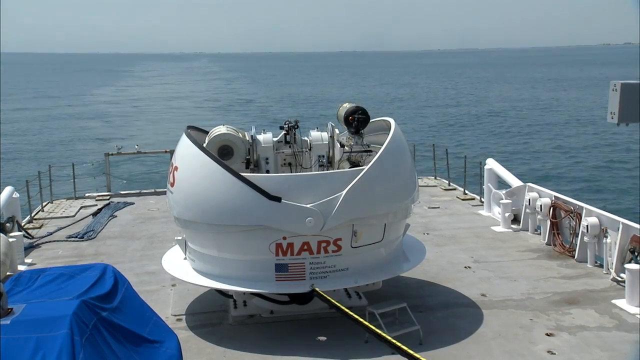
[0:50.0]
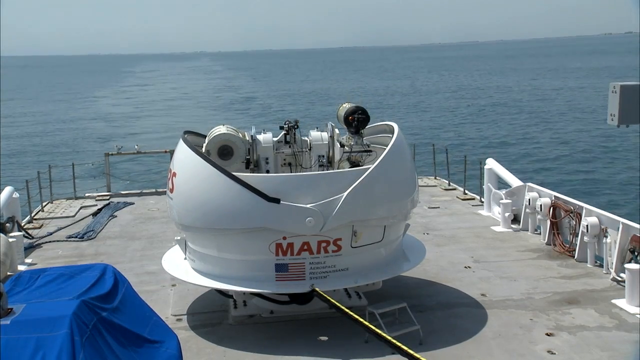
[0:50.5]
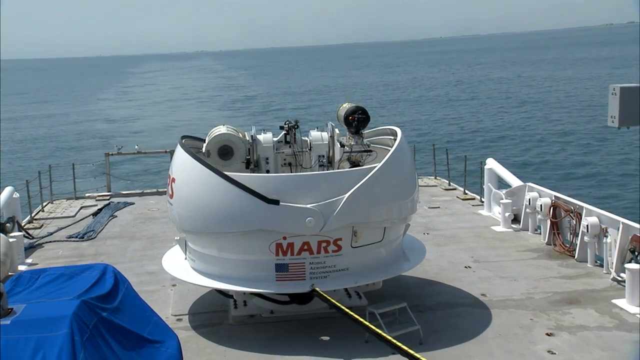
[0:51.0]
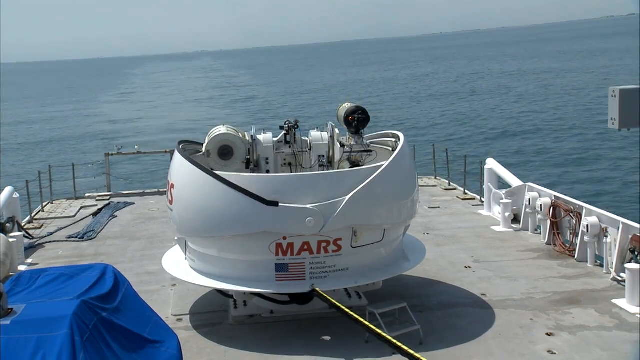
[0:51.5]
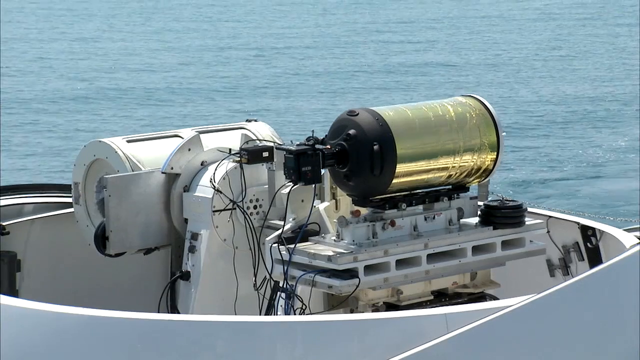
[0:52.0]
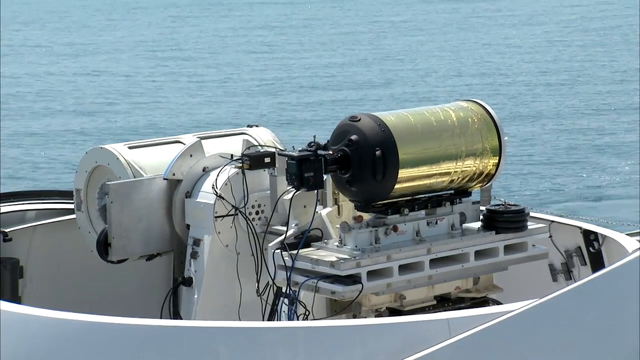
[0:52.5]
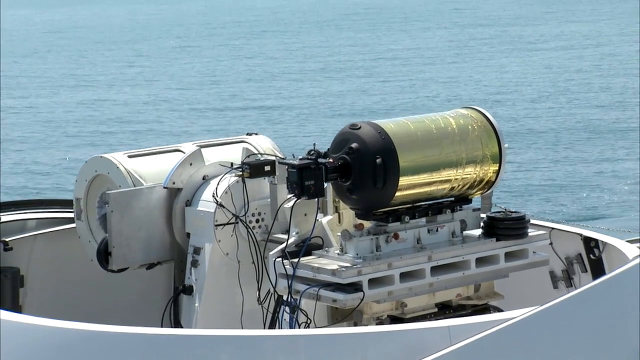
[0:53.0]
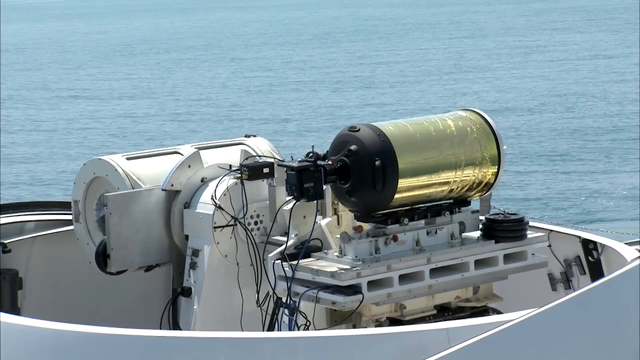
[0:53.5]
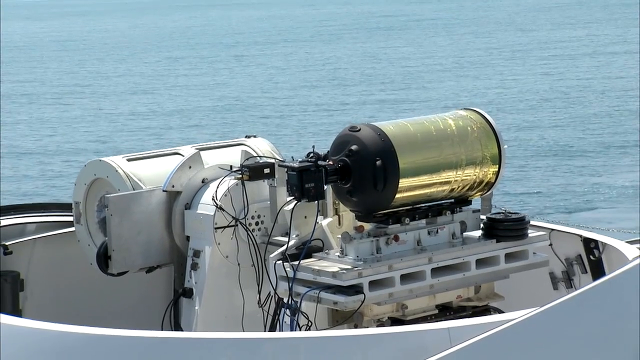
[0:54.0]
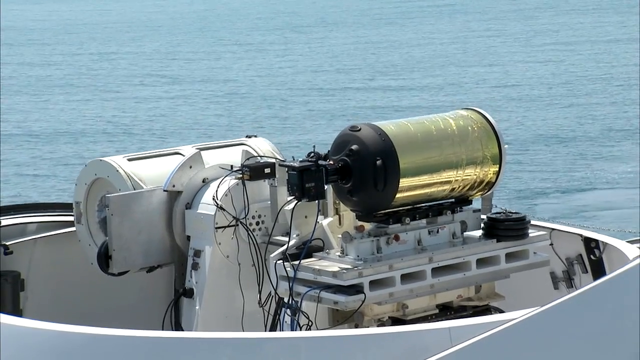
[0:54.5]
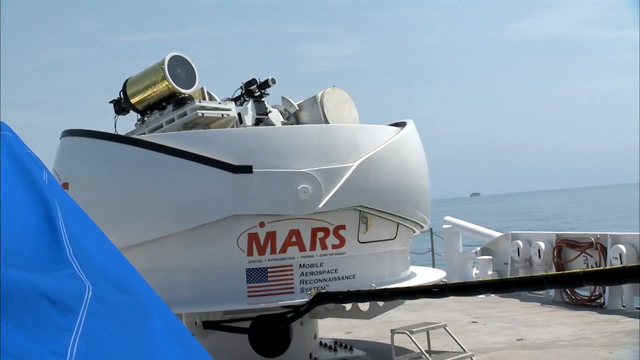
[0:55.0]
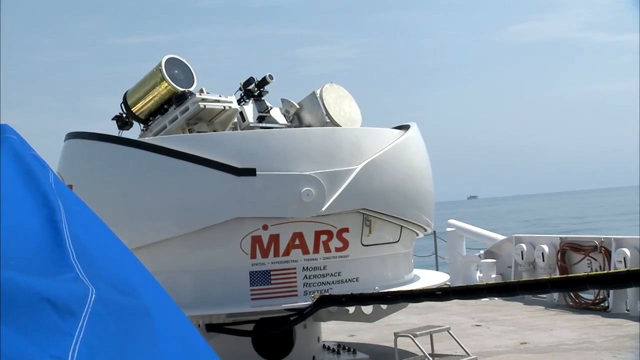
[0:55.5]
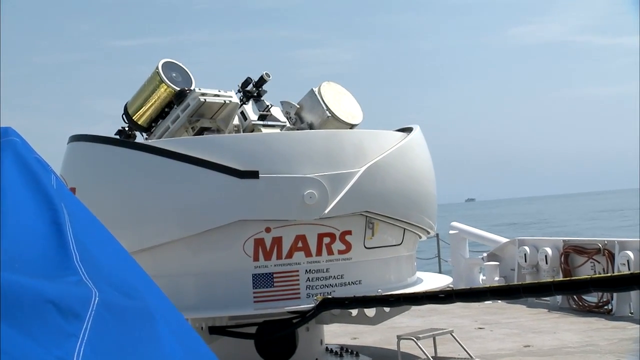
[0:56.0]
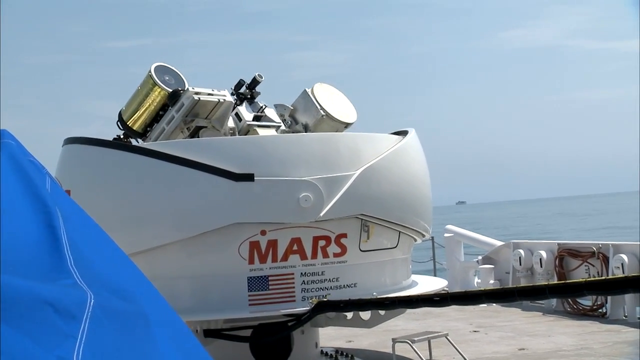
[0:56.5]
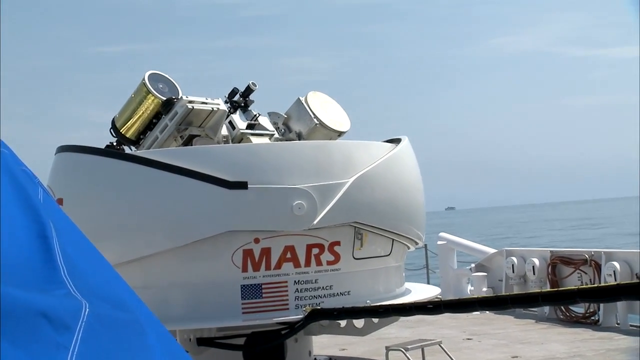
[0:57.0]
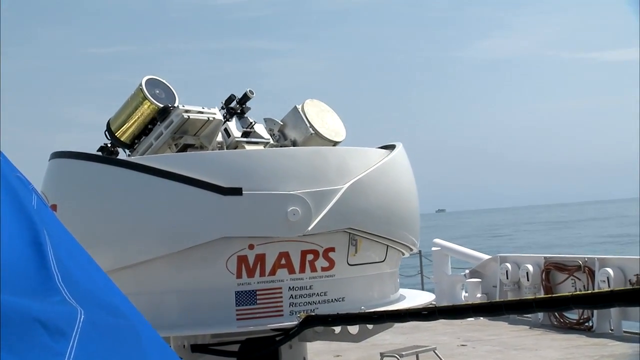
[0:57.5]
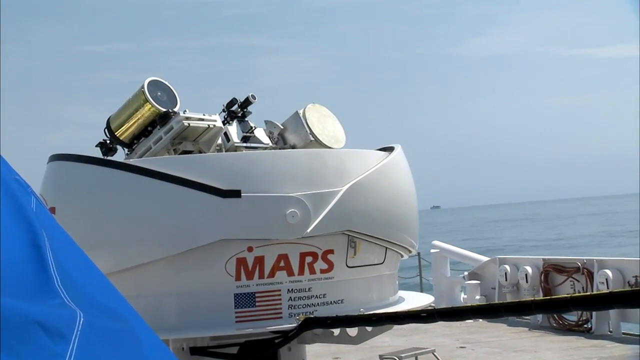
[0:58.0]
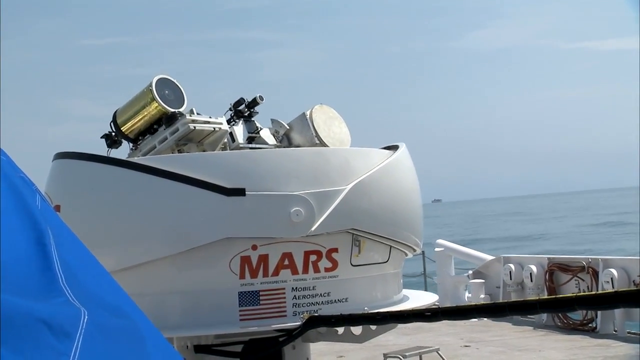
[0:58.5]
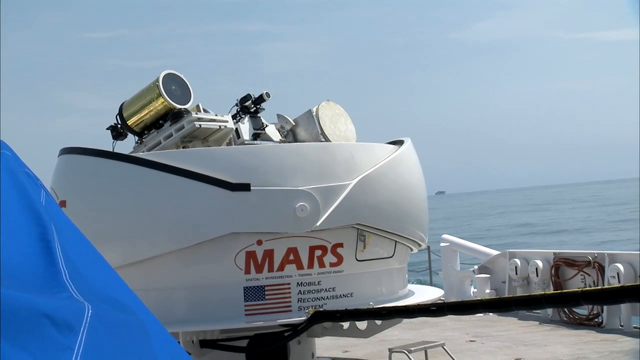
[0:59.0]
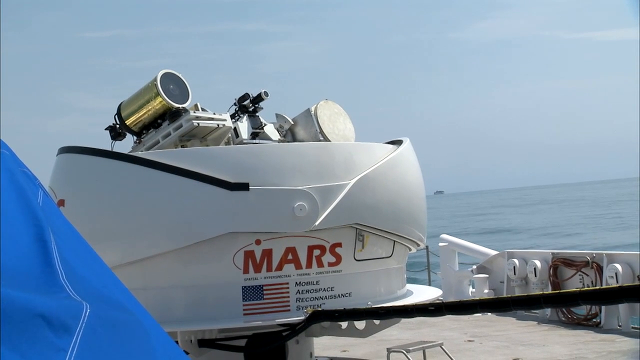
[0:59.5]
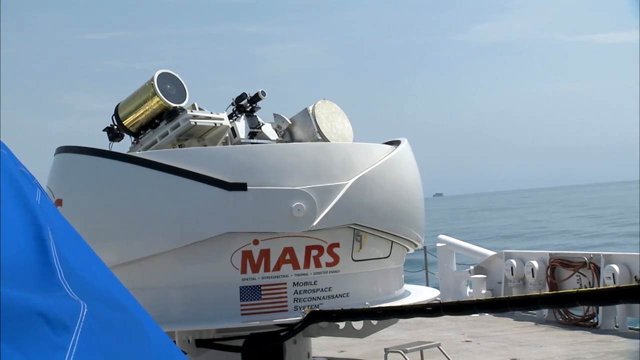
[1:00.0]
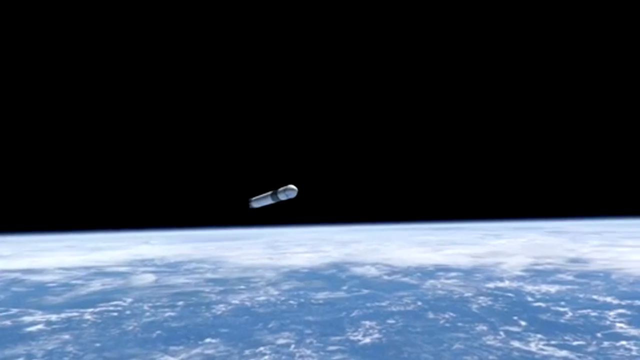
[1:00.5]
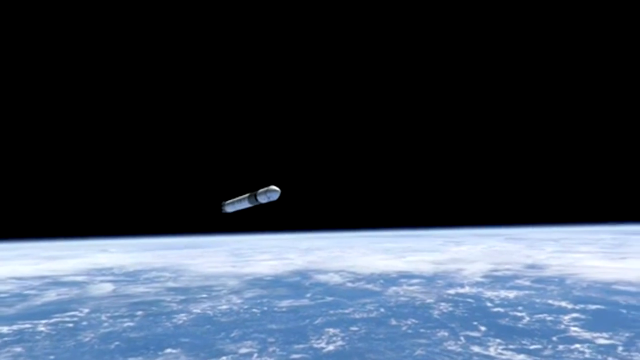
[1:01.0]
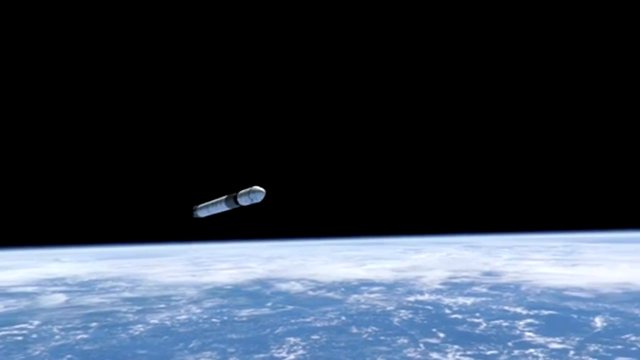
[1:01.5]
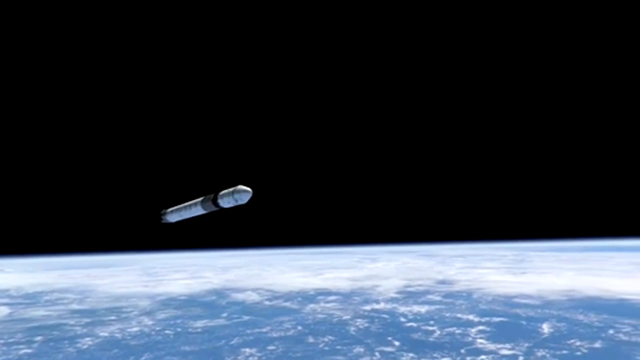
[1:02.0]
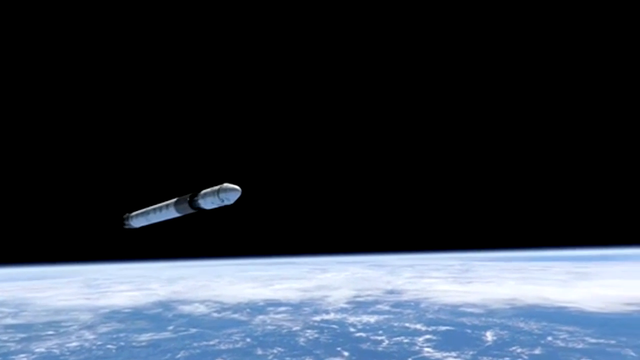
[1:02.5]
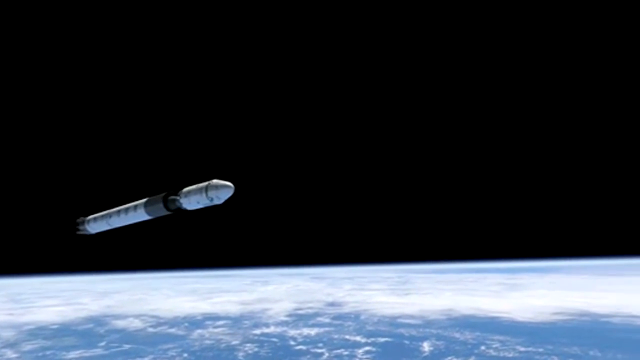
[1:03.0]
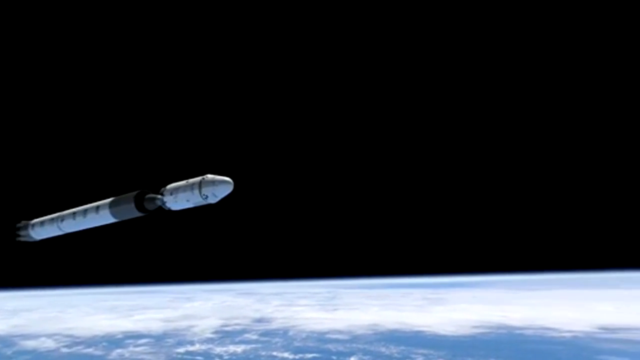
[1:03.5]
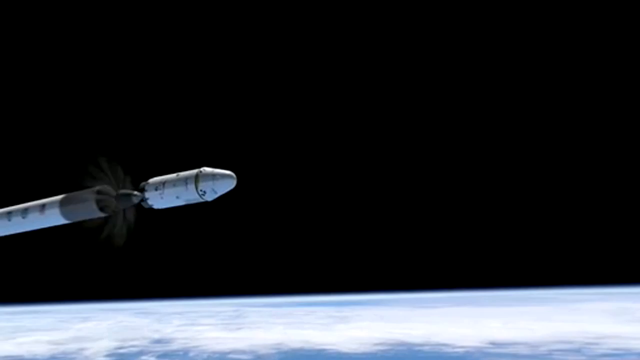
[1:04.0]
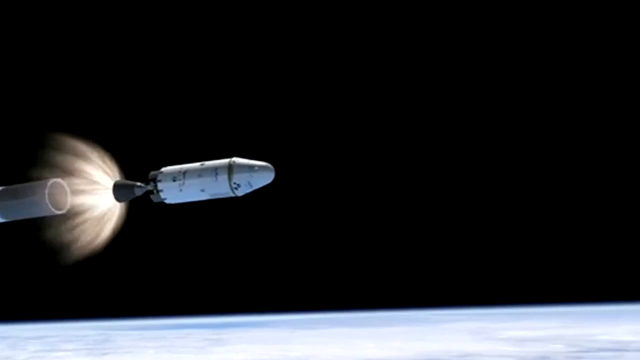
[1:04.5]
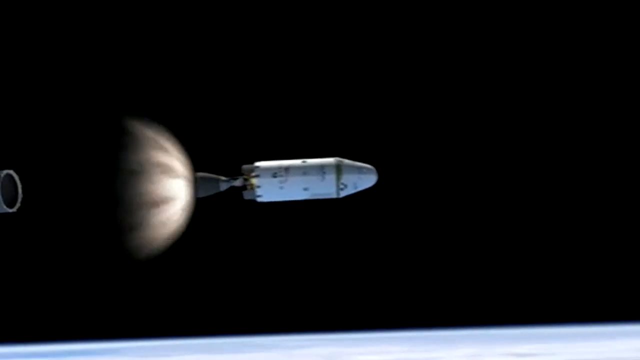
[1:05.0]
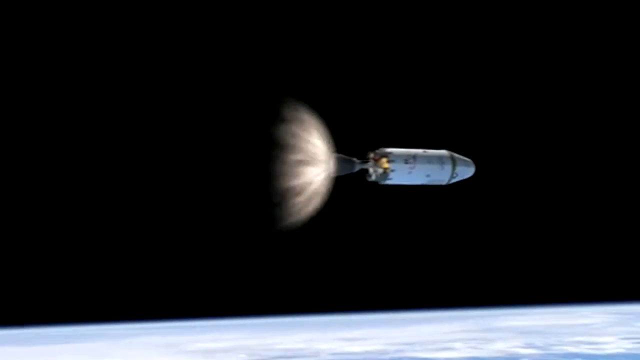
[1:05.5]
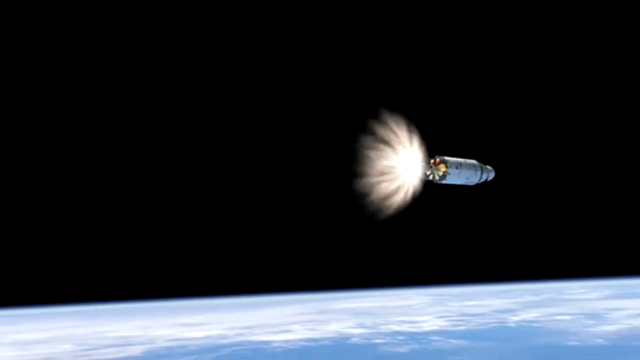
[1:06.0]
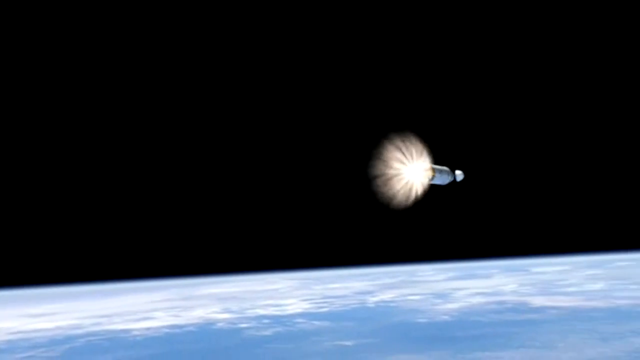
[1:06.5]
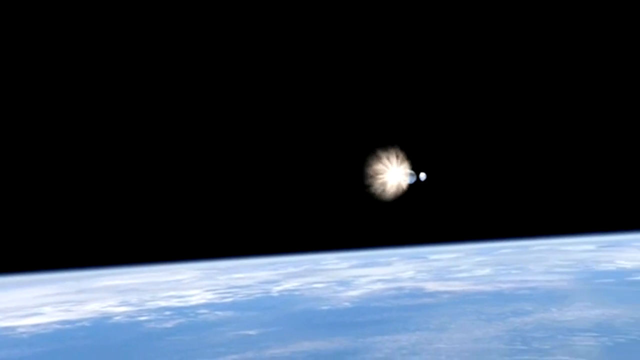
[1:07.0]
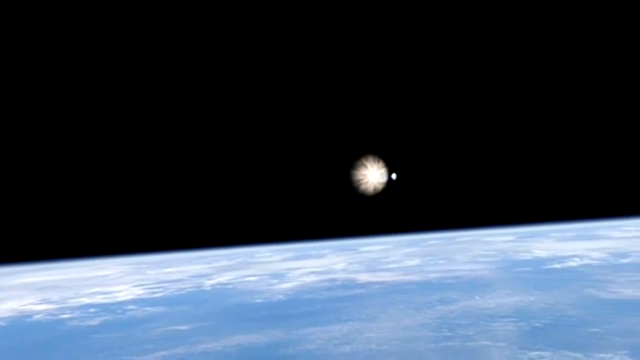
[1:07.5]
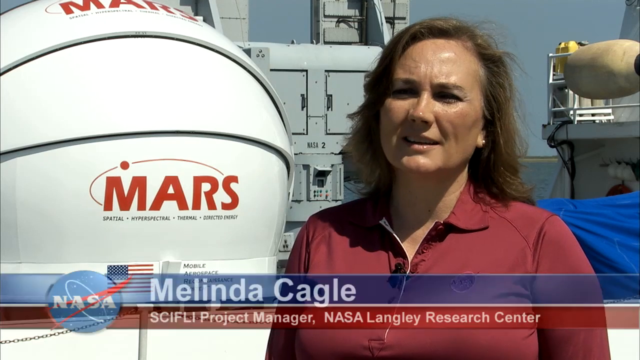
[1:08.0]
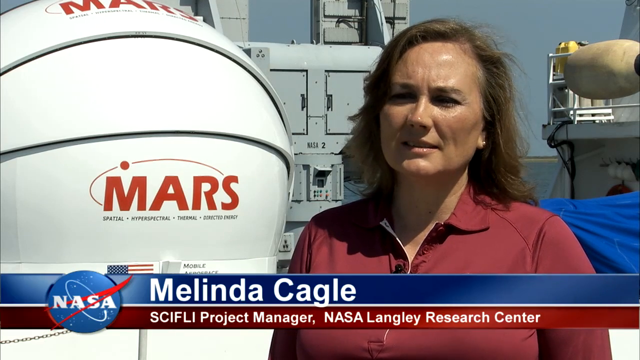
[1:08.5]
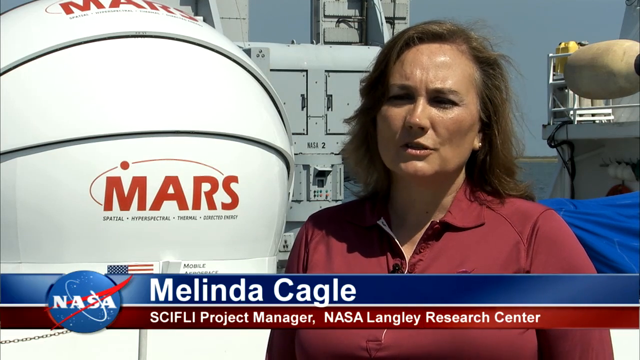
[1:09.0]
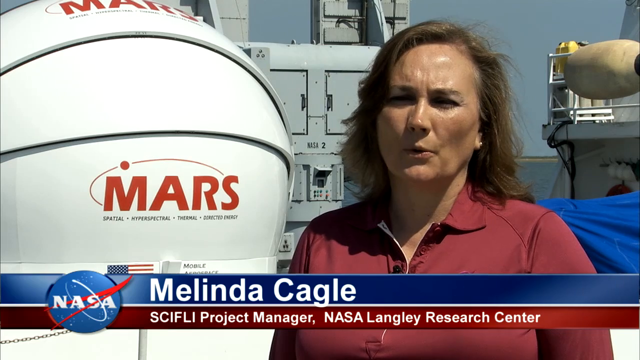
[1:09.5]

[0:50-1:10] The jaws of the sphere open all the way, followed by a close-up of the instruments in the middle: kind of a gold canister on its side, black wires and various white instruments around it. Another view looks up at the instrument as if from outside, from the Mars logo, showing the same gold cylinder, with the blue tarp still visible to the left. The instruments inside tilt up, apparently so they can look towards the sky. The scene switches to space with an all-black background: kind of a rocket or missile comes across from the left, with an illuminated Earth with clouds at the bottom. The missile crosses the screen and comes close; its top breaks off with a flash like a jet of flame from the part coming apart, and the smaller part becomes a capsule that continues traveling by itself. Then another person, a woman, stands in front of the closed white sphere that says "Mars".